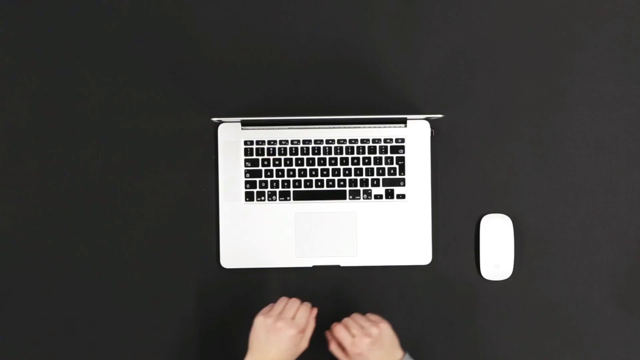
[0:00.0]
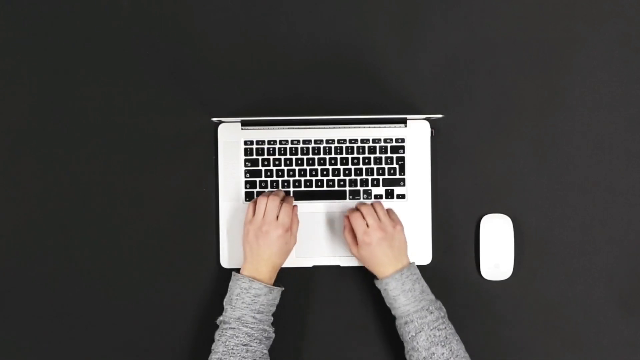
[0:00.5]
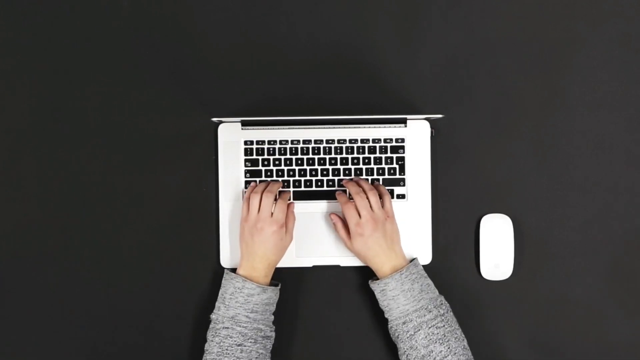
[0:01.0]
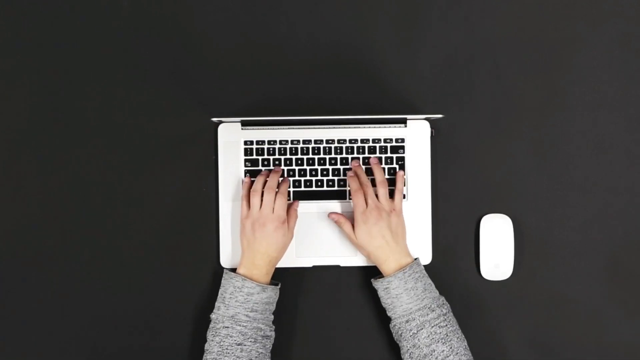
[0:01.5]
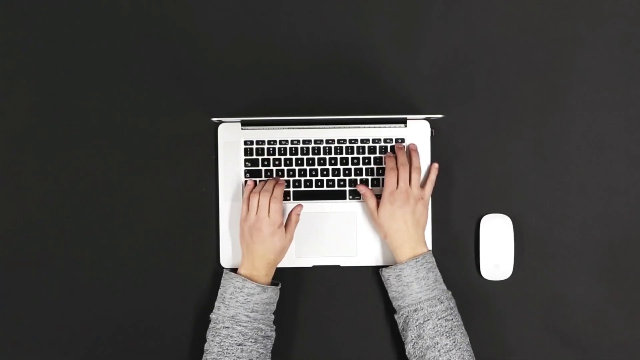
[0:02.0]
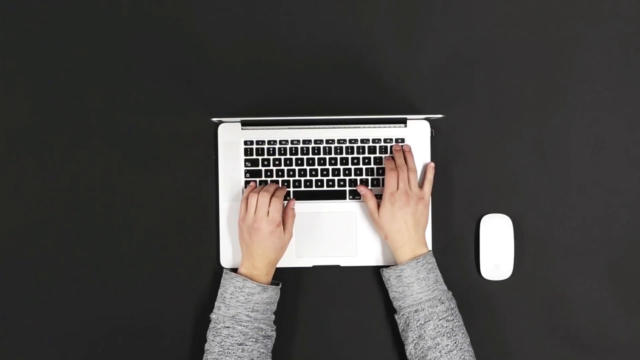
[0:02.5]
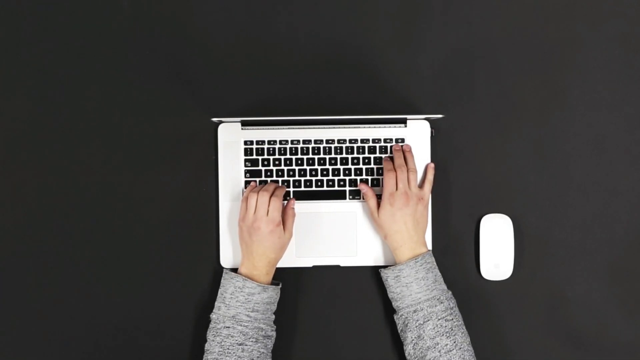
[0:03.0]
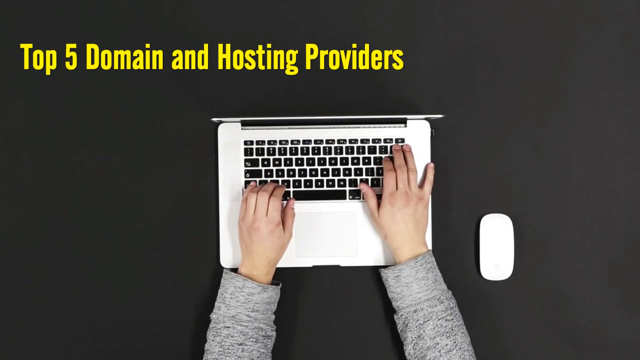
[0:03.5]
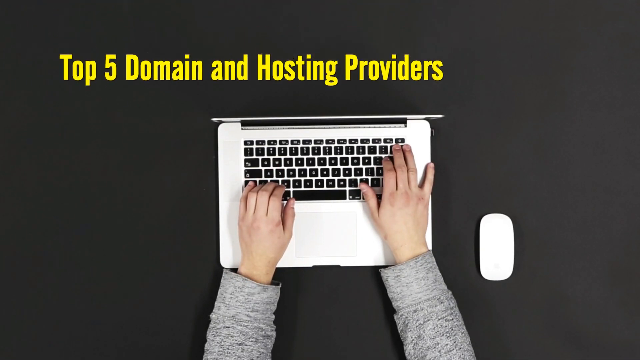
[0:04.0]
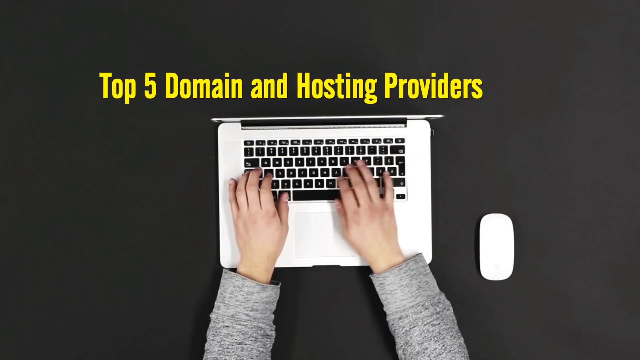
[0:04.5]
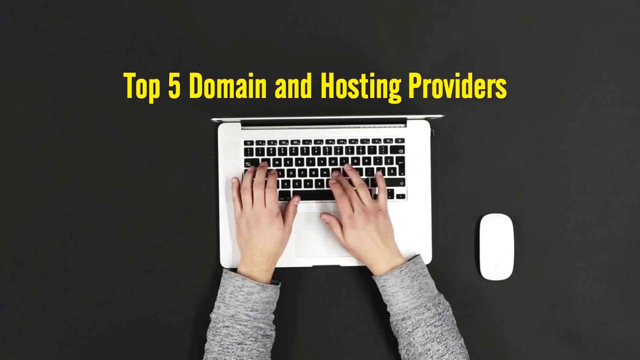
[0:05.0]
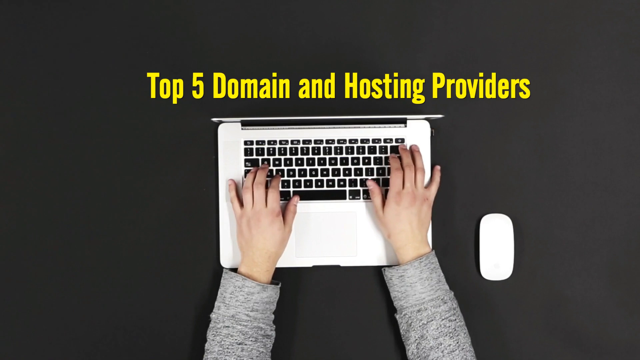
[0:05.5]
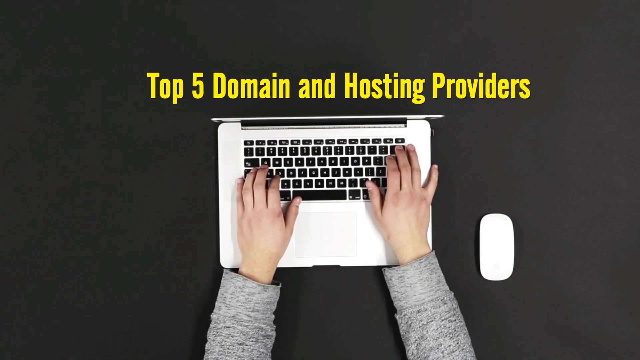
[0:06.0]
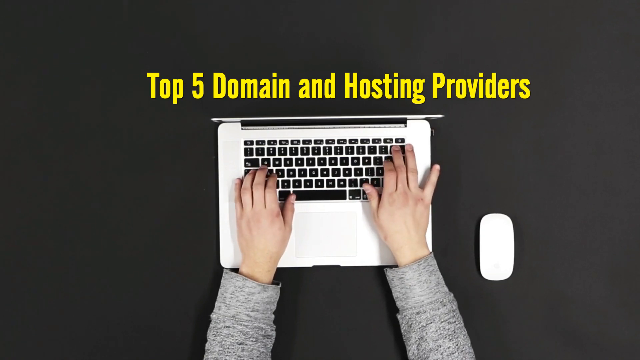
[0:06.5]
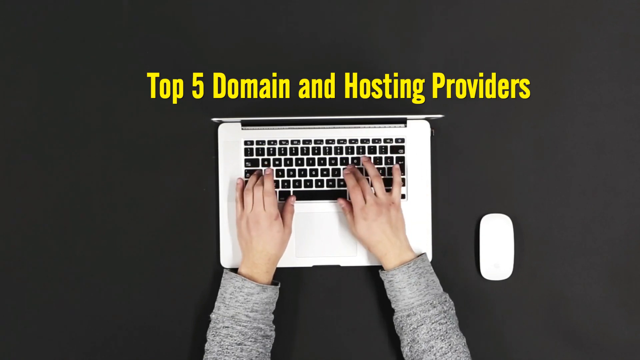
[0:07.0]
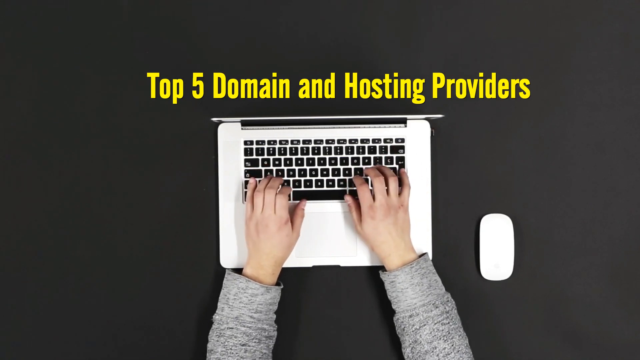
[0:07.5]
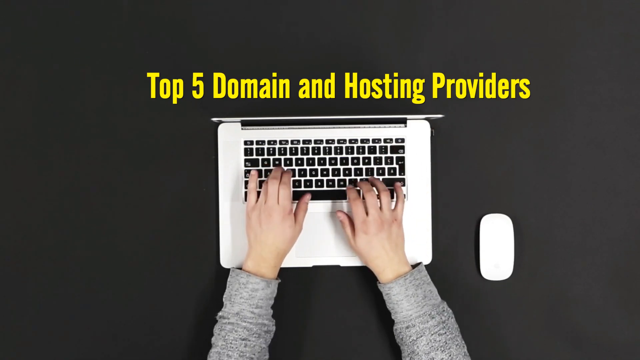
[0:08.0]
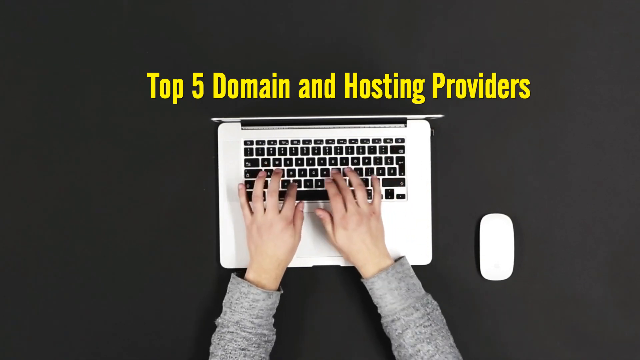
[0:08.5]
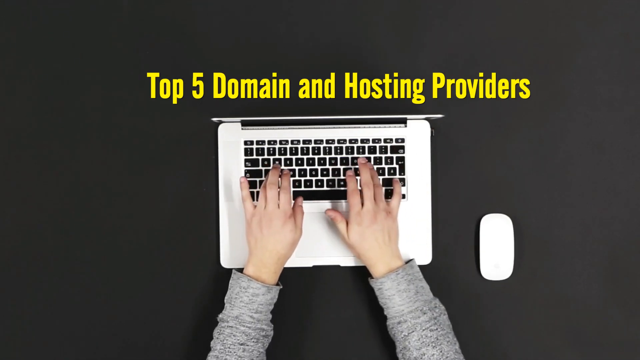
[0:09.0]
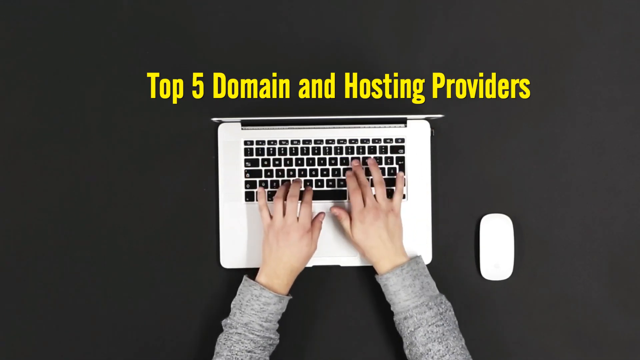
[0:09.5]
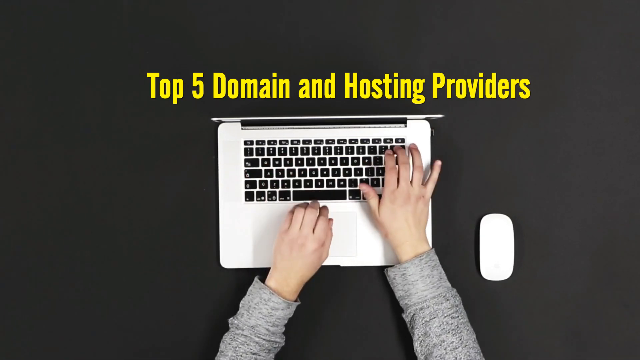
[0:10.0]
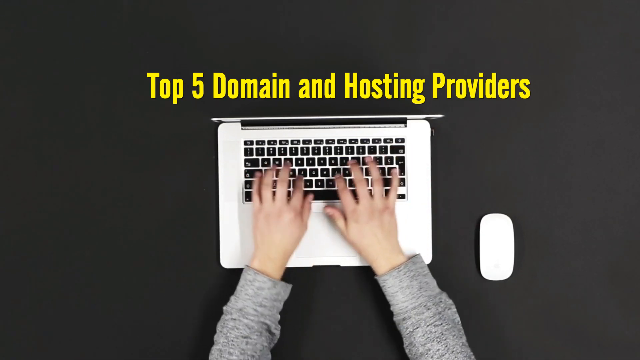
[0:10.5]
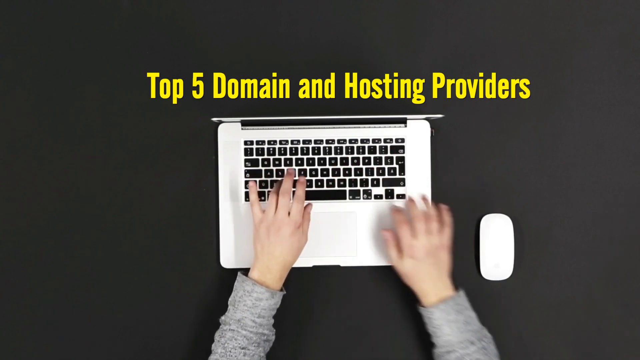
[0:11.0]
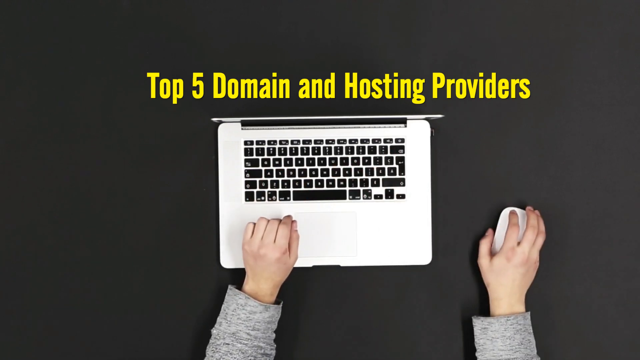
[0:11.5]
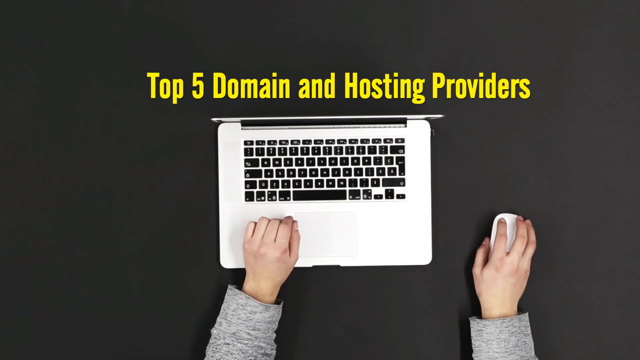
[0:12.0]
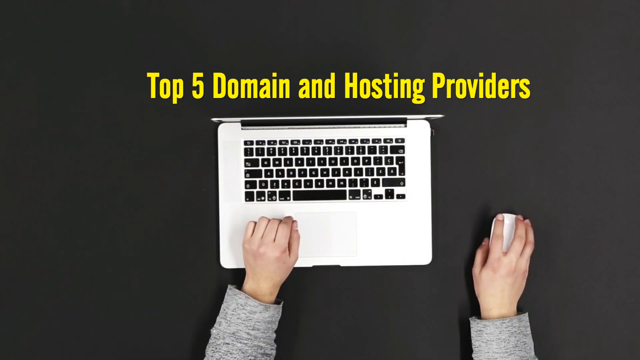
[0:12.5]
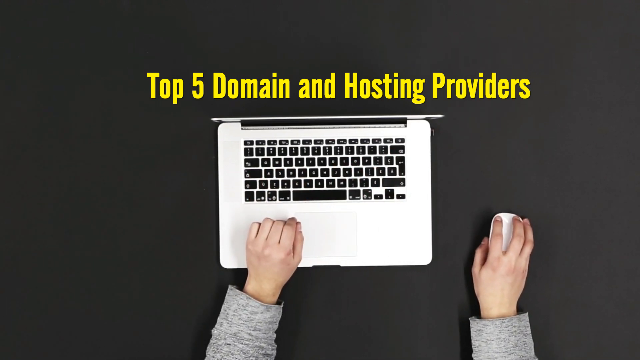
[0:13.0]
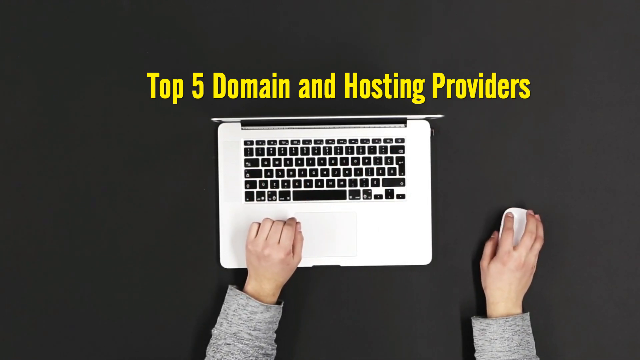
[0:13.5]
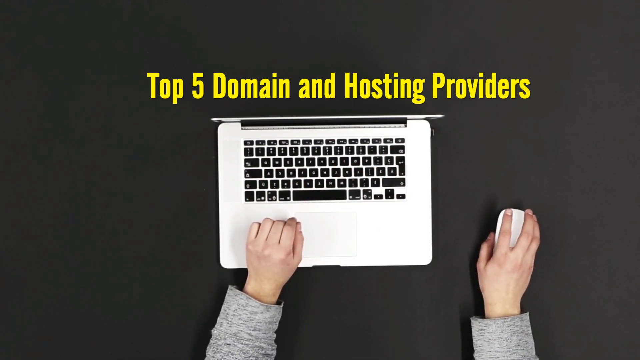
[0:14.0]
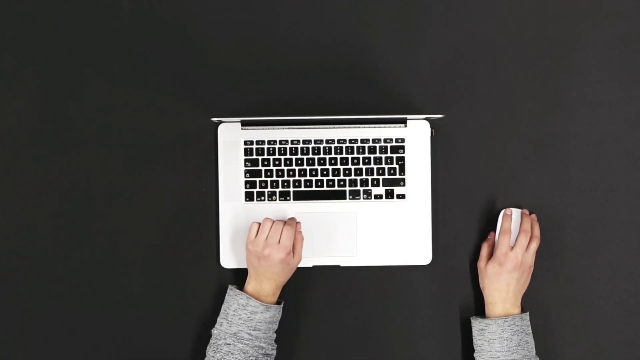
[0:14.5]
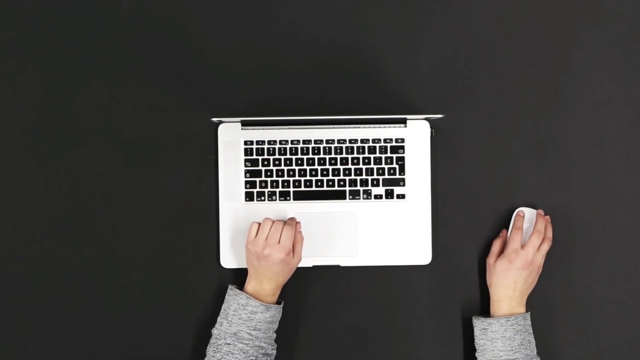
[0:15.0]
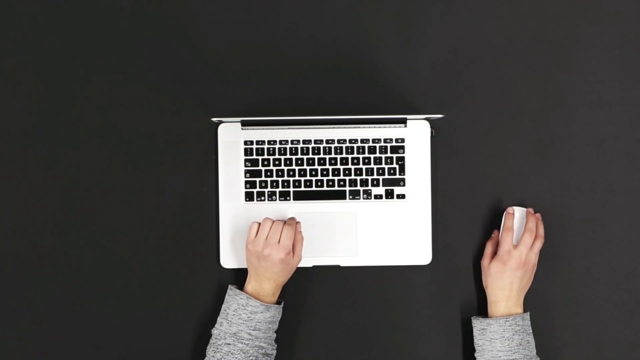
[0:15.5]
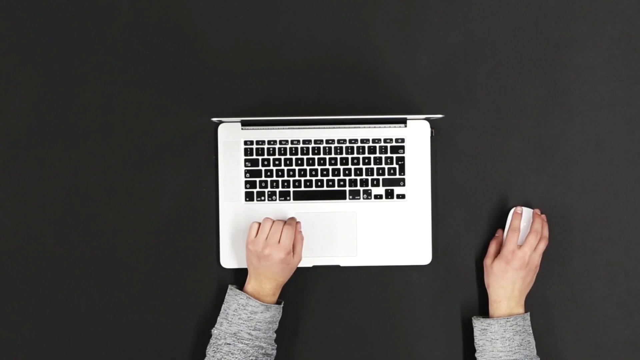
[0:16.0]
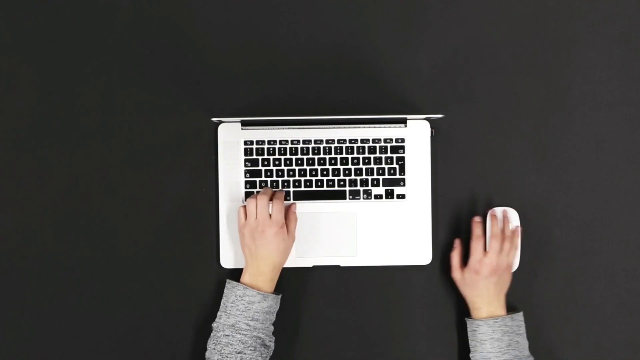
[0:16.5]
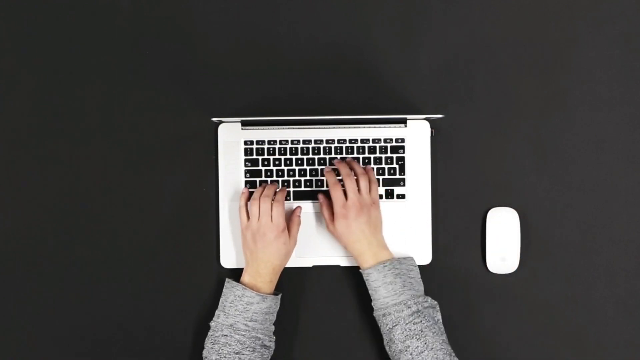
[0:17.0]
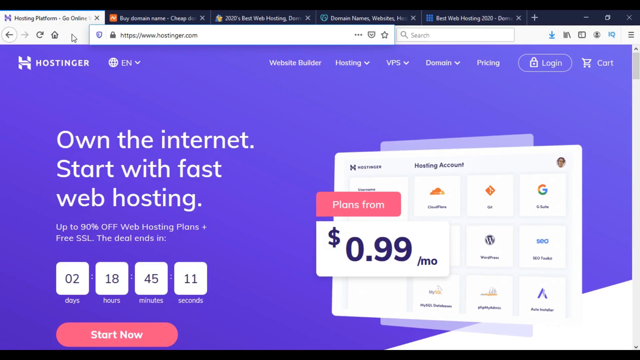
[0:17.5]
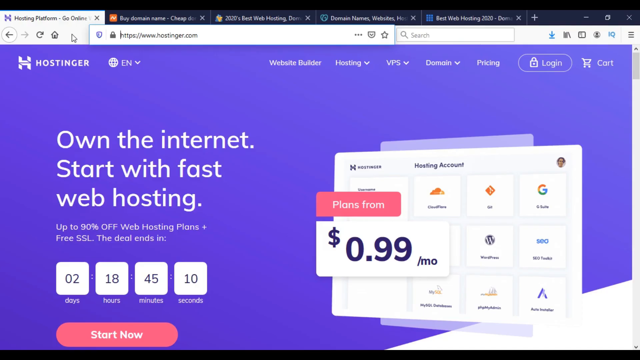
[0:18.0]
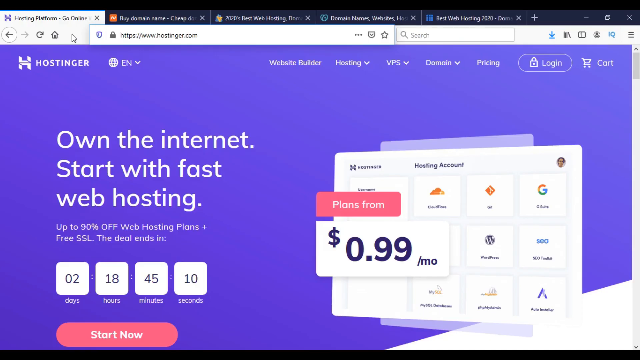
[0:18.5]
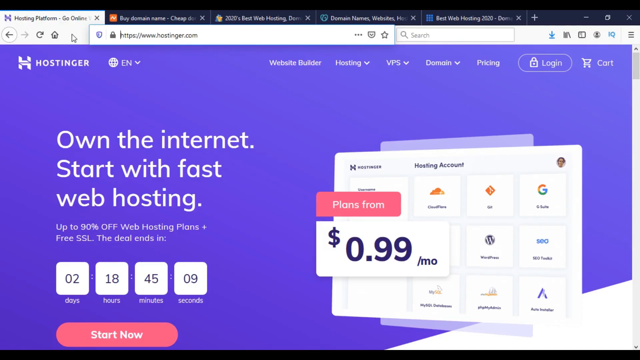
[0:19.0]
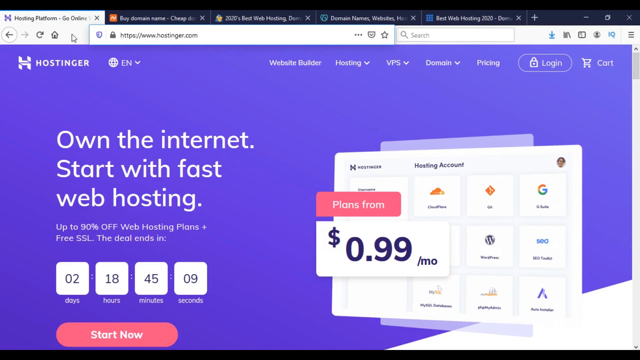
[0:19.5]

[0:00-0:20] The video opens on a mostly black screen with a downward view of an open laptop. The lid is open so that neither its front nor back is visible, only the edge of the top of the lid. There is no readable writing on the laptop, just the keyboard, and it does not seem to have a touchpad. To the right of the laptop is a white mouse sitting on the floor with no mouse pad. At the very bottom of the screen are two hands, which come out and start typing on the laptop. The words "top five domain and hosting providers" bounce down across the top of the laptop screen. Then a screen pops up for a second that says "on the Internet" and shows some pricing.